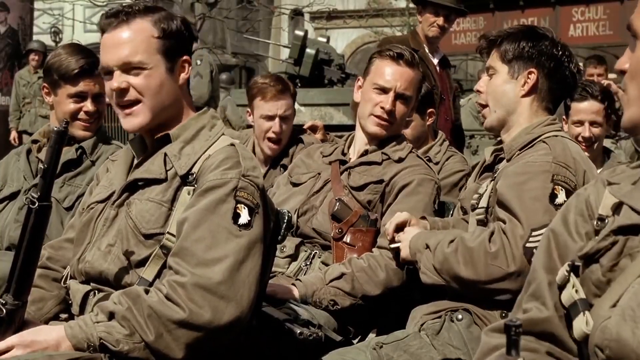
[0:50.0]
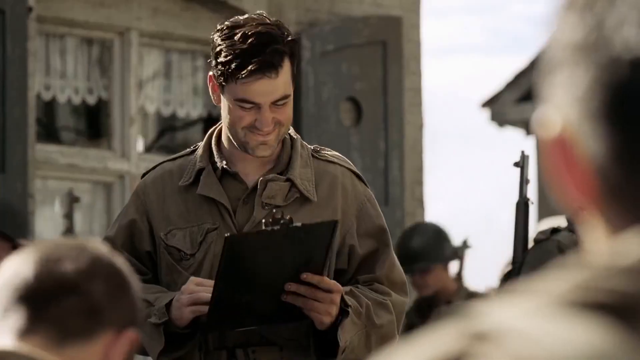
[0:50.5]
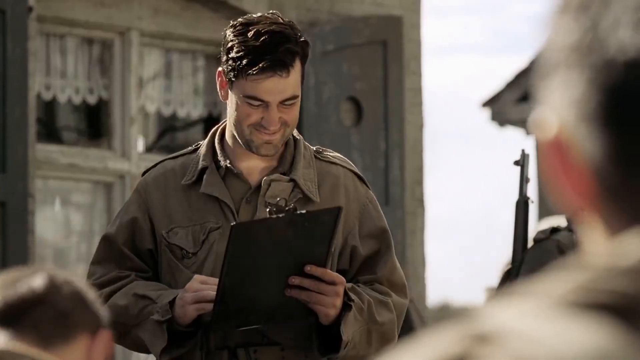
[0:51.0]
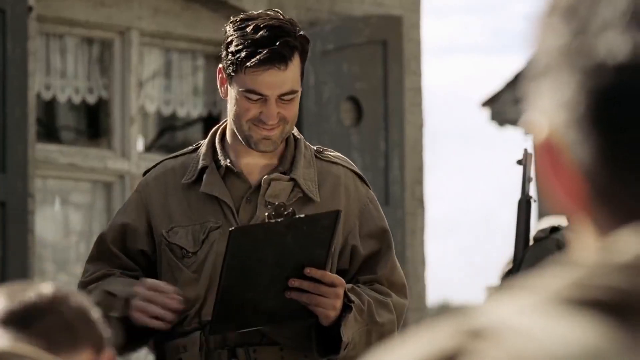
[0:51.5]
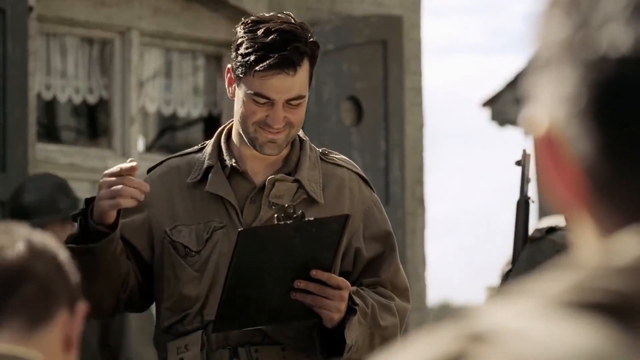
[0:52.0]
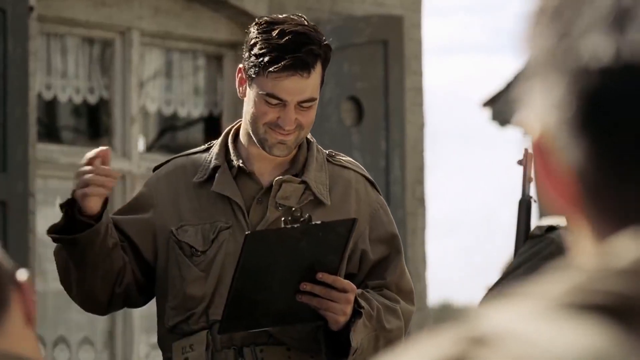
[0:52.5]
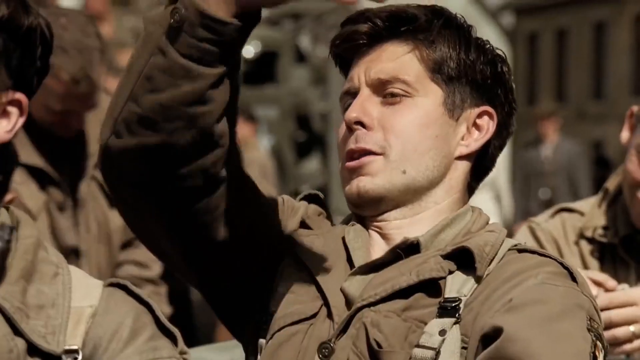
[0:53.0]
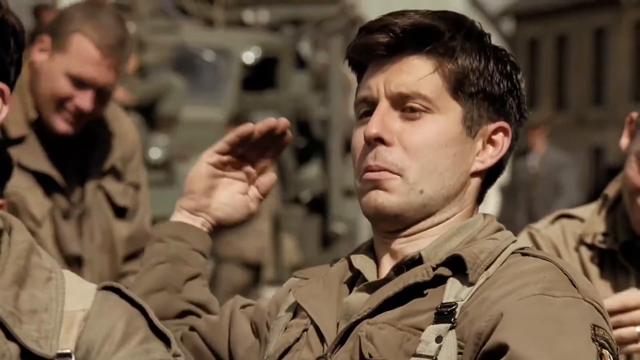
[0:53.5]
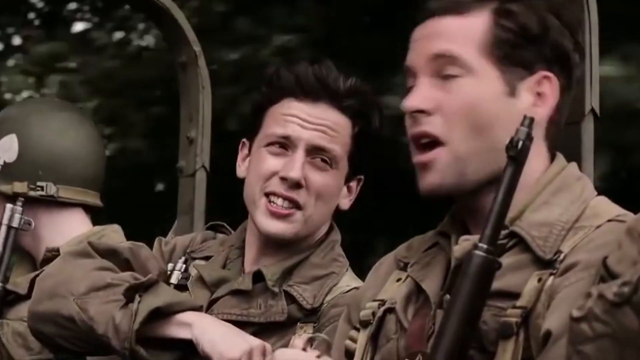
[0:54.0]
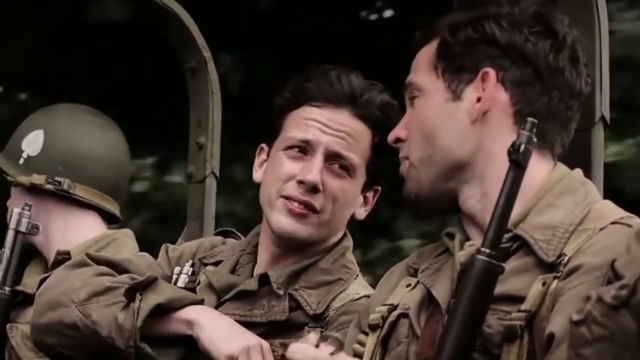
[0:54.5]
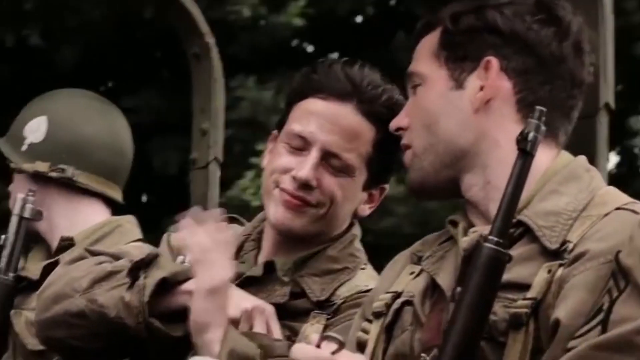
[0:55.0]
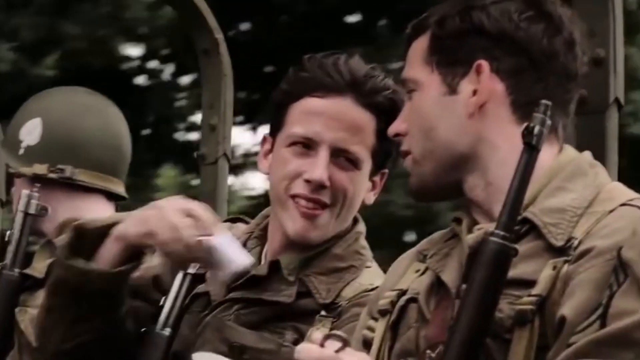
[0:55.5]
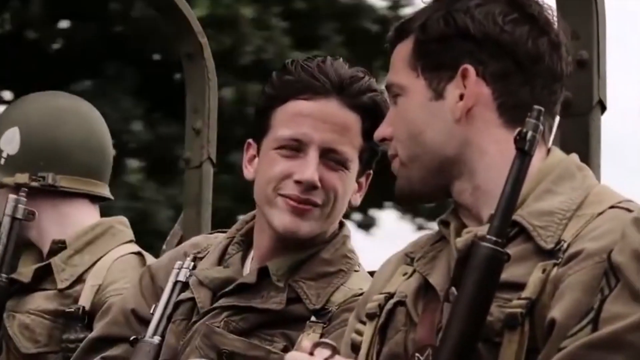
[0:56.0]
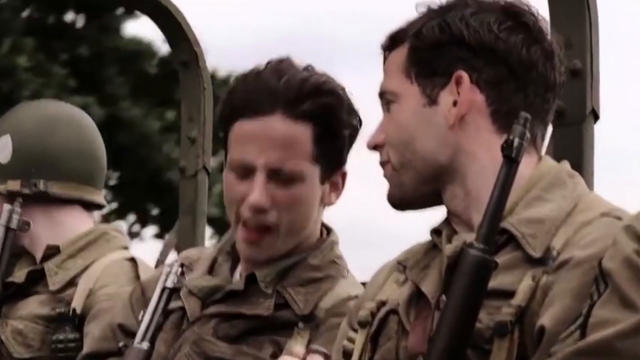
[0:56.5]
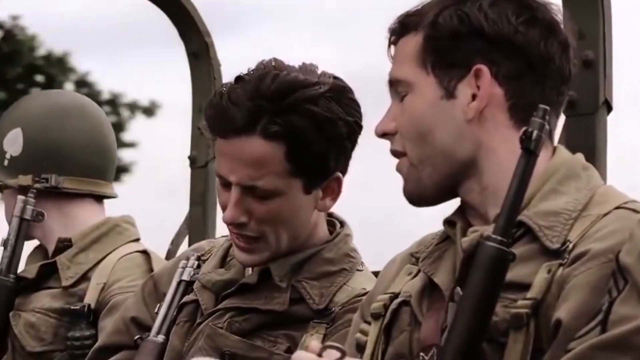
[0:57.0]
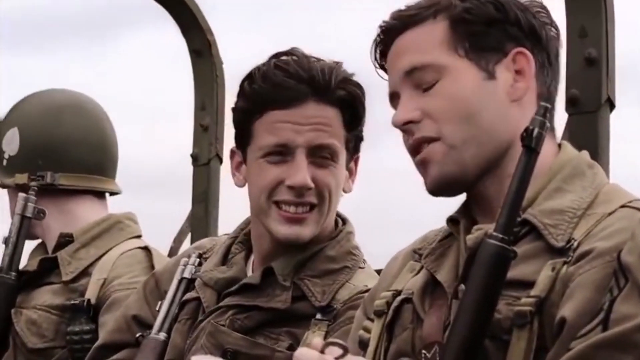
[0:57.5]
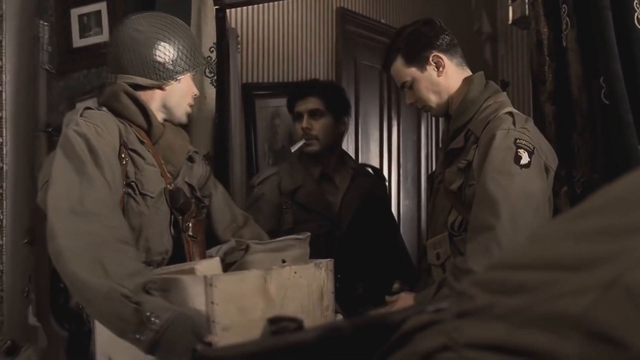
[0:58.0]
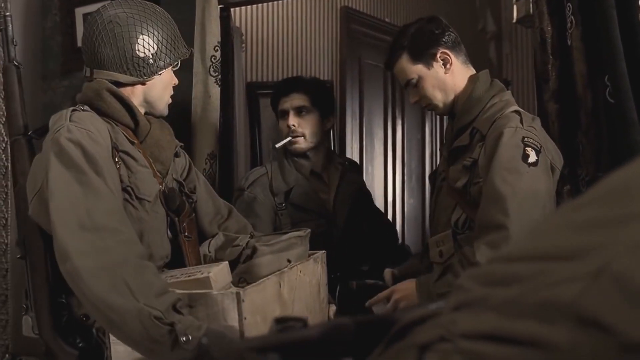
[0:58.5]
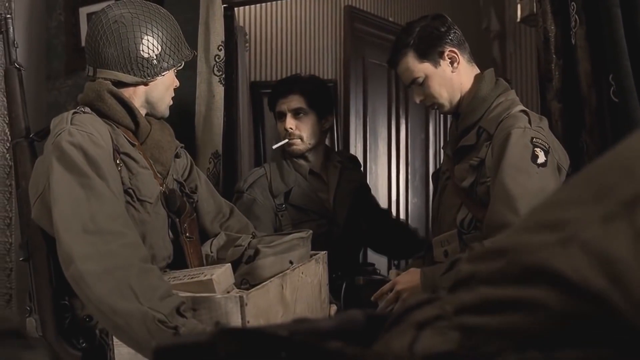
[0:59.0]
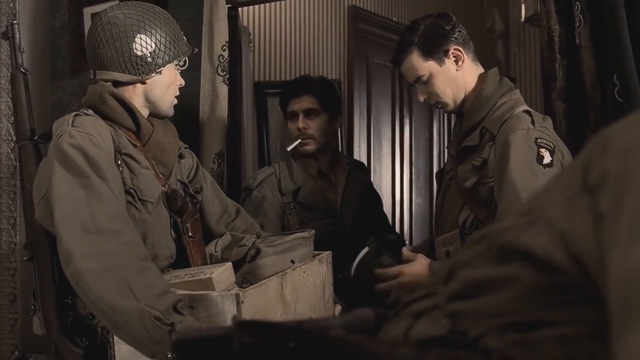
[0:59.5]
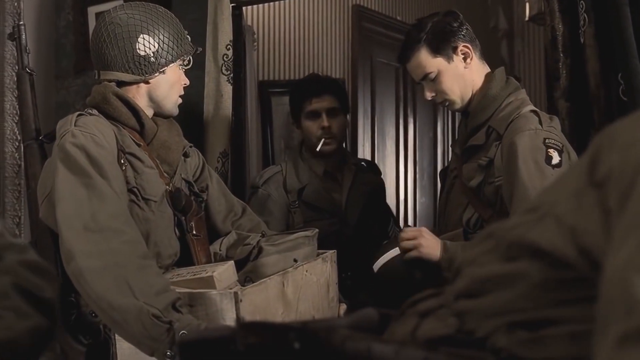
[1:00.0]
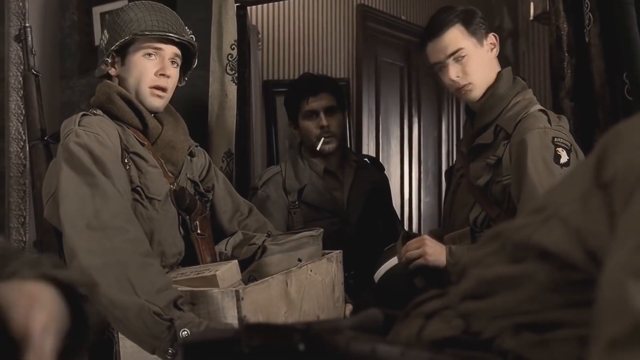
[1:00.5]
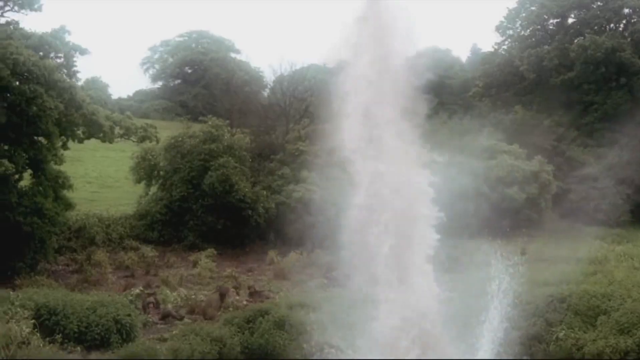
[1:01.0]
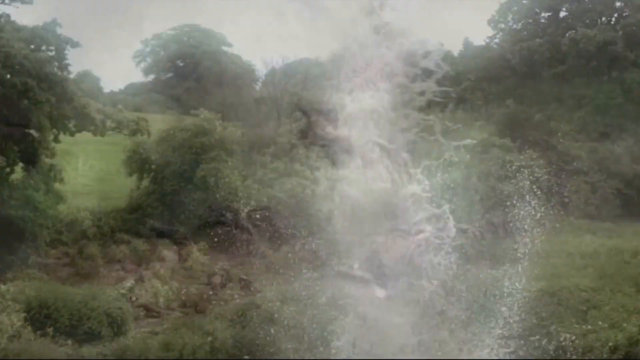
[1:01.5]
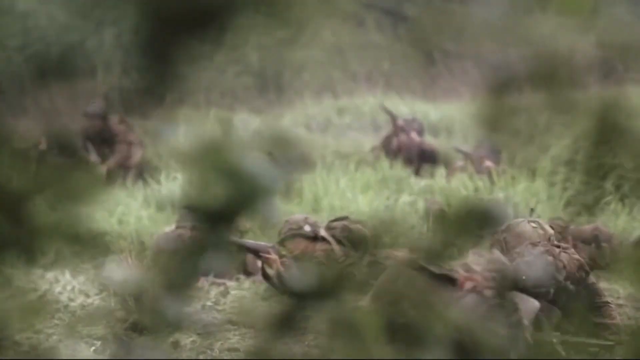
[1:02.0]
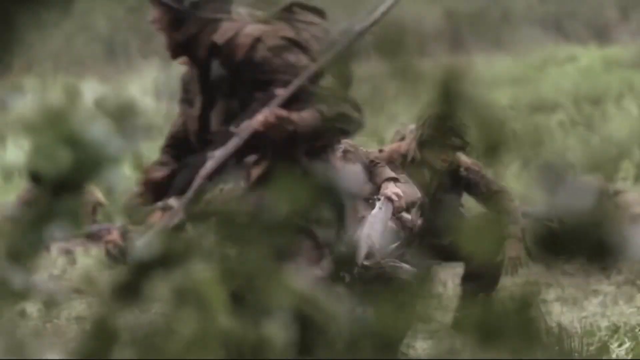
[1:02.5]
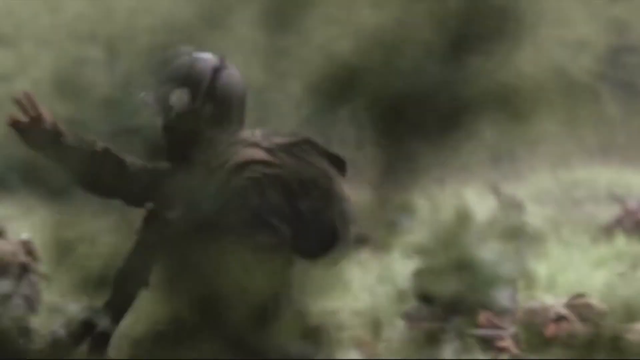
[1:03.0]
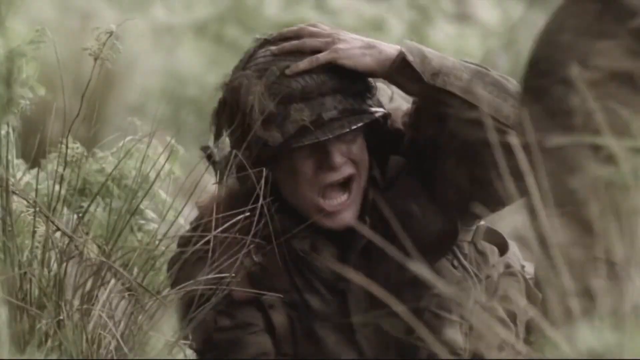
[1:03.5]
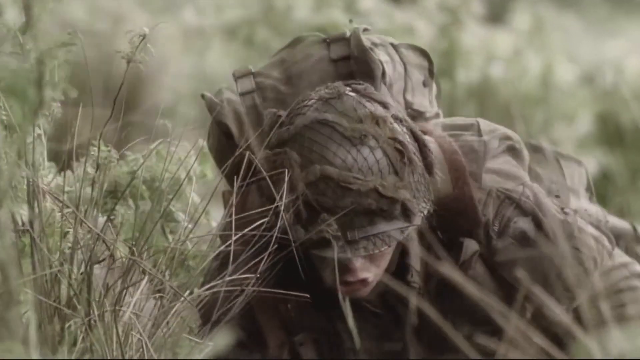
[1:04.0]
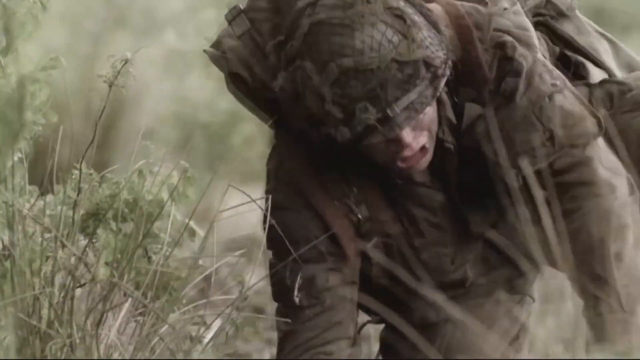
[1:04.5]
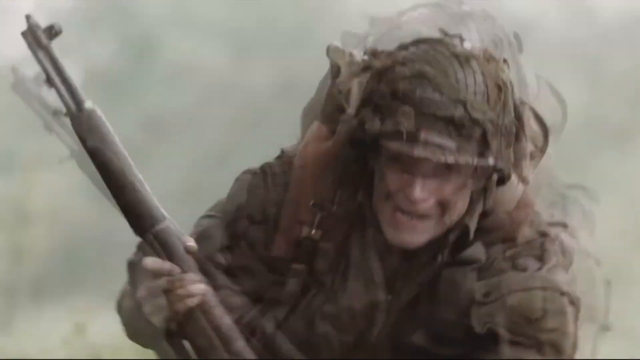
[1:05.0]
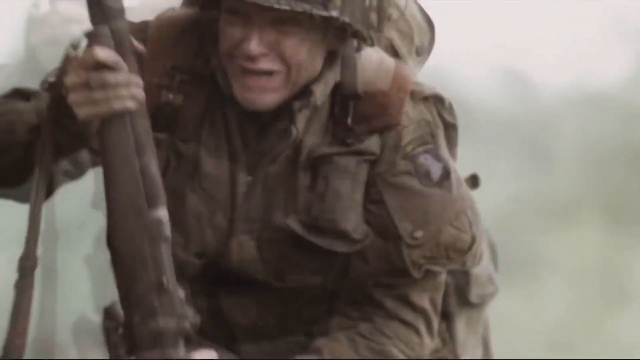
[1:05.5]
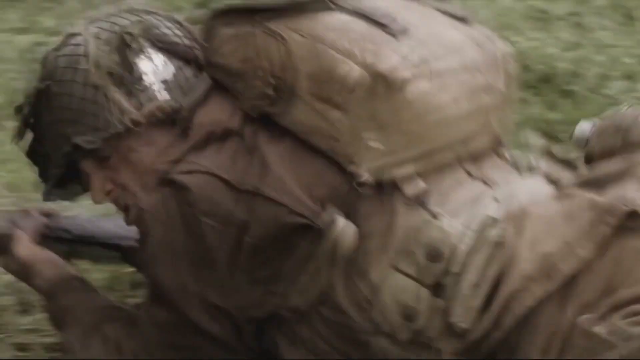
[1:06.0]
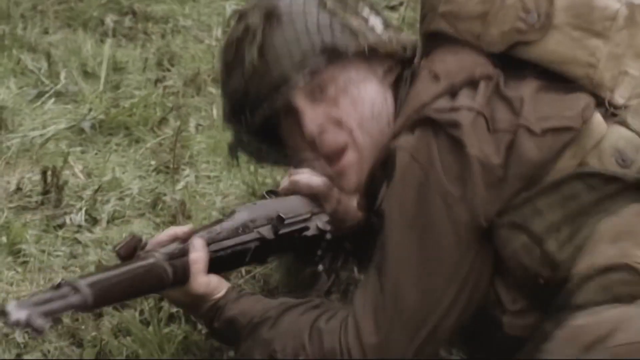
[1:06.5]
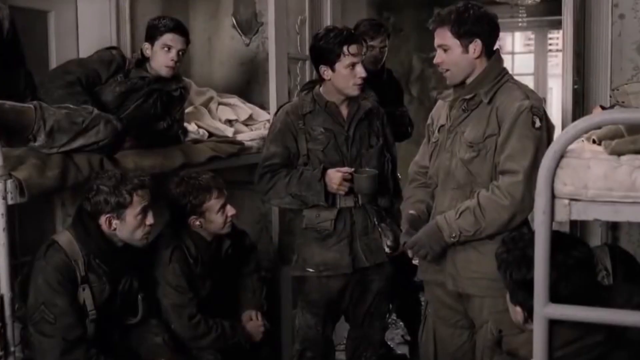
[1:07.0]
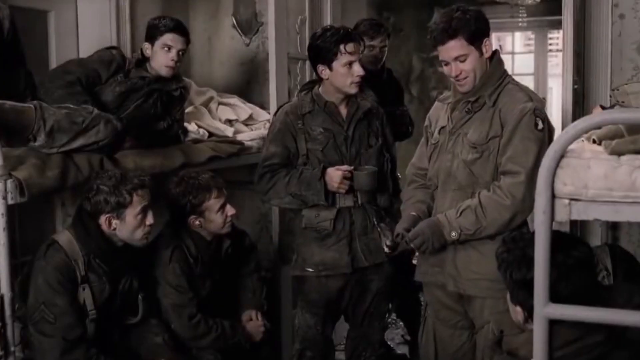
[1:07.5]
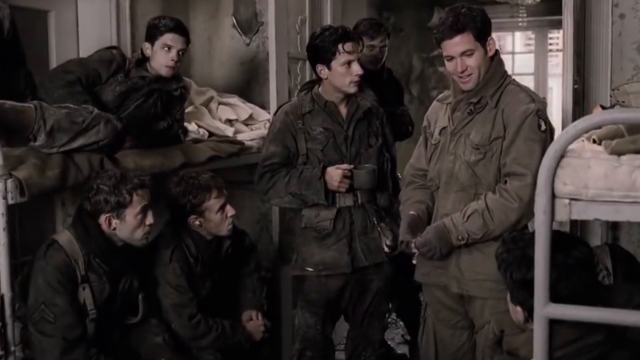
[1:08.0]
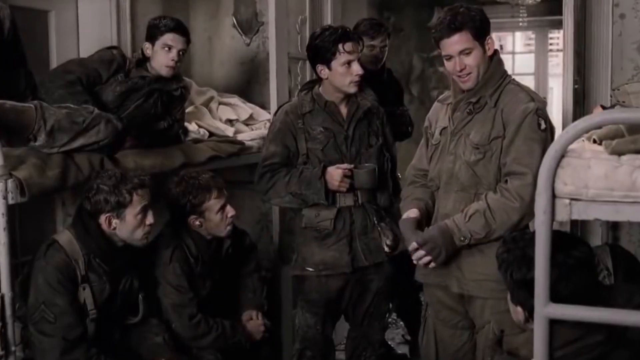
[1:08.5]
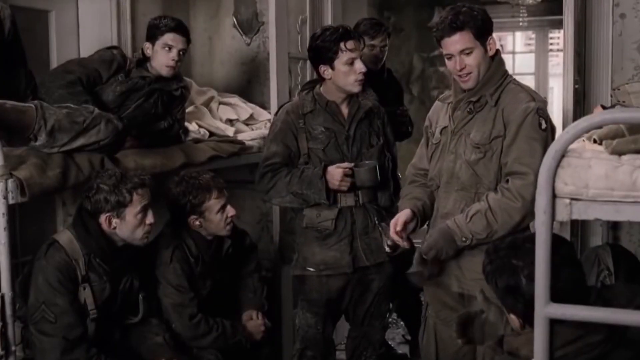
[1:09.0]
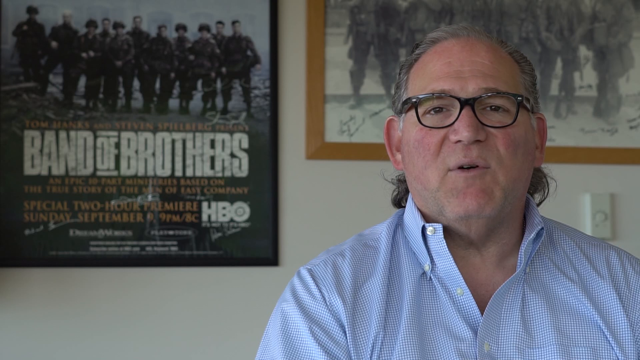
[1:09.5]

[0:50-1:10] Soldiers sit and talk in very good color, like footage from the 1980s, possibly still from the movie Band of Brothers. A commander or someone with a clipboard talks, with blue skies, small clouds and a building behind him. The soldiers look almost as if they are singing, and a soldier is about to salute. Soldiers ride in a vehicle driven down a road, with trees going by, and some hold guns. Two soldiers talk. Inside a house or similar building, a soldier in the middle has a cigarette in his mouth, with a soldier wearing a helmet on the viewer's left and a soldier with no helmet on the viewer's right; they are having a conversation. Someone holds some boxes. Outside in a green area with many trees and grass, soldiers run around, lie down and yell. The scene returns to what appears to be the barracks. A recognizable actor appears, showing this is part of the movie.